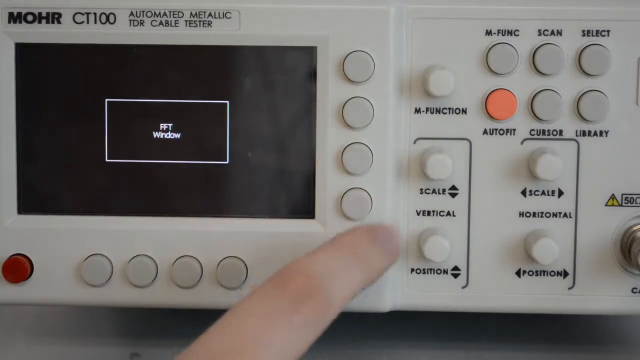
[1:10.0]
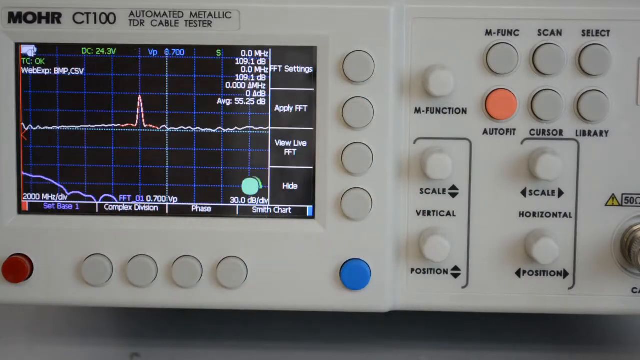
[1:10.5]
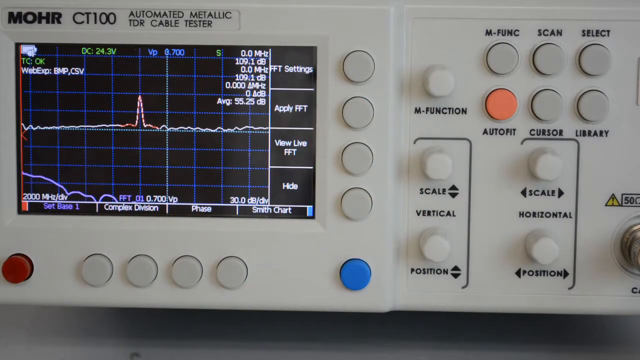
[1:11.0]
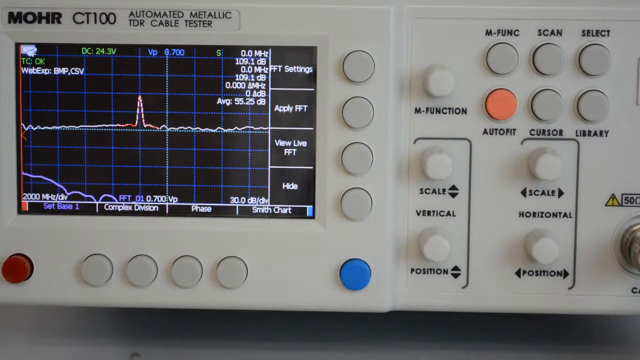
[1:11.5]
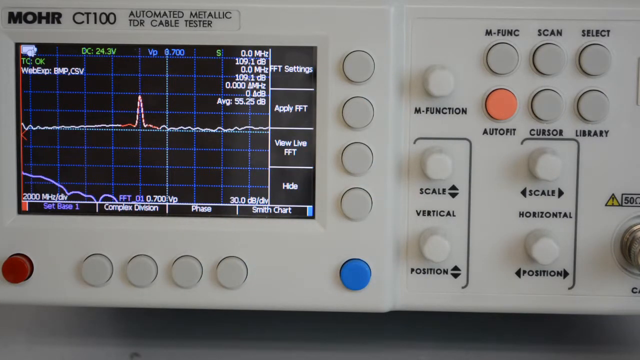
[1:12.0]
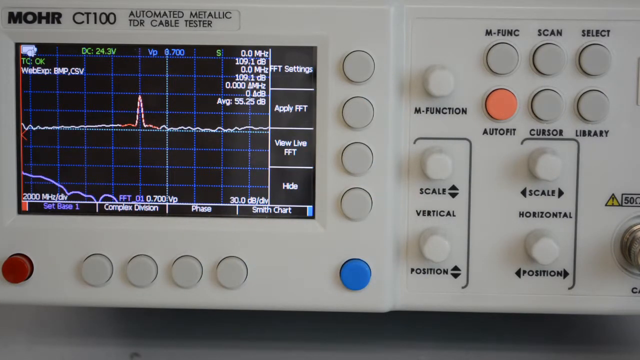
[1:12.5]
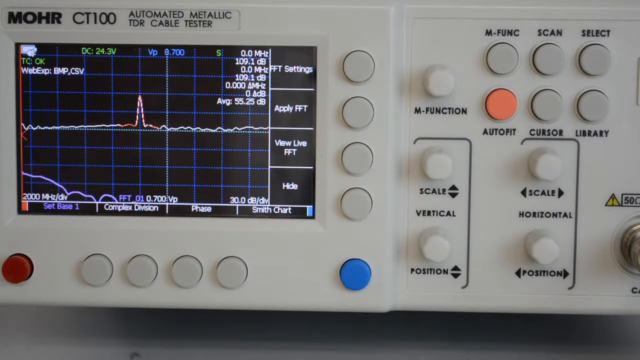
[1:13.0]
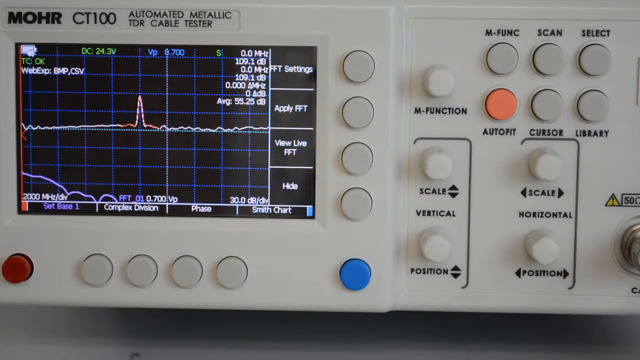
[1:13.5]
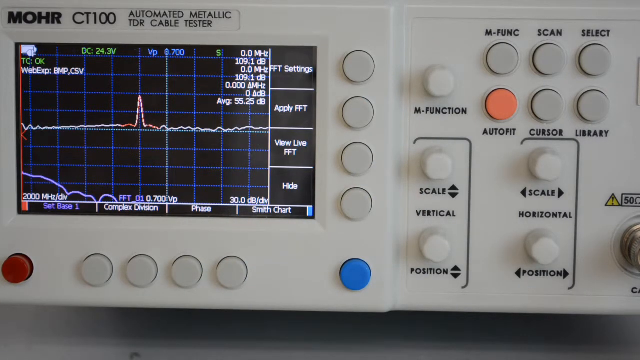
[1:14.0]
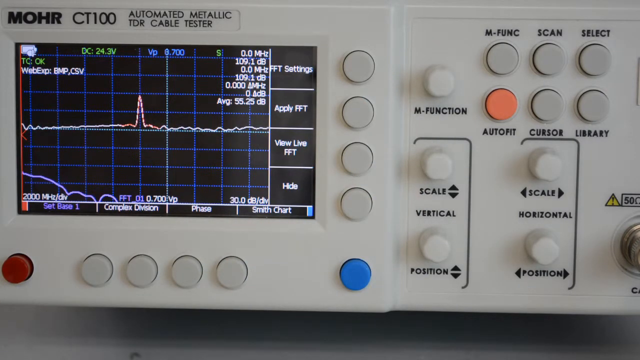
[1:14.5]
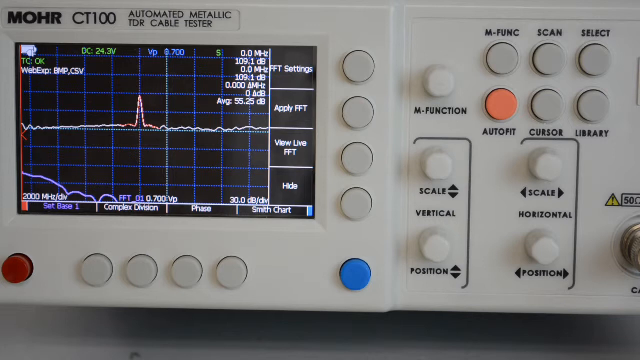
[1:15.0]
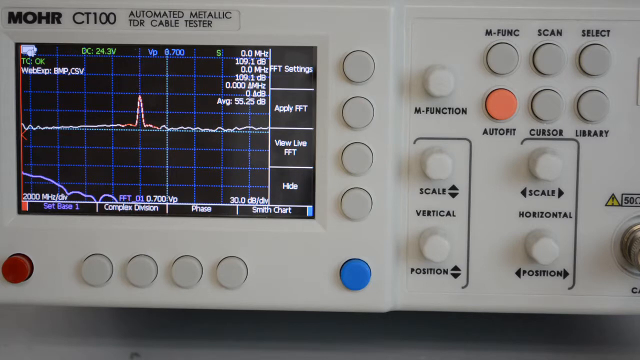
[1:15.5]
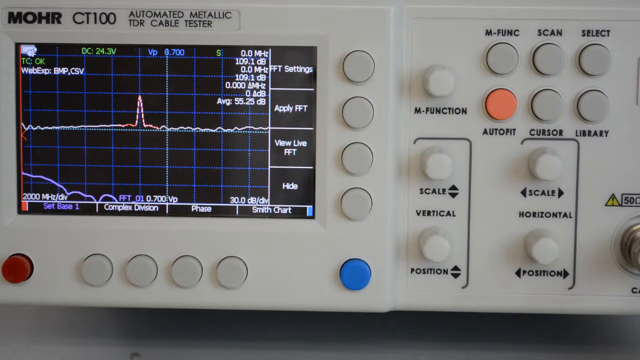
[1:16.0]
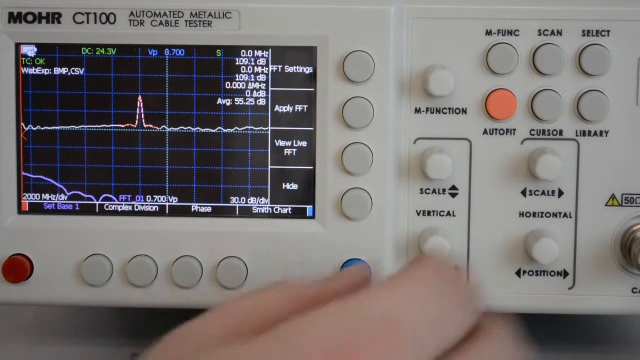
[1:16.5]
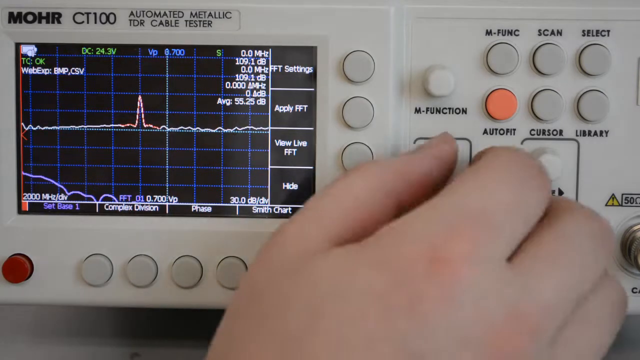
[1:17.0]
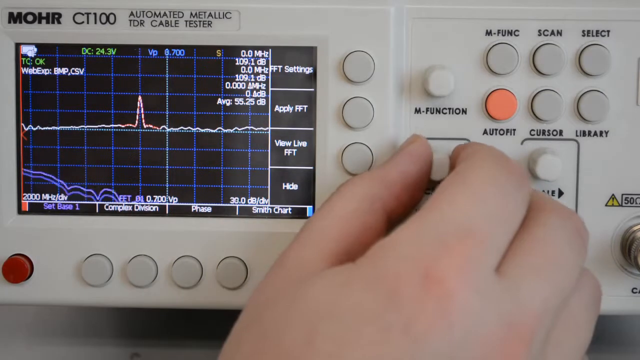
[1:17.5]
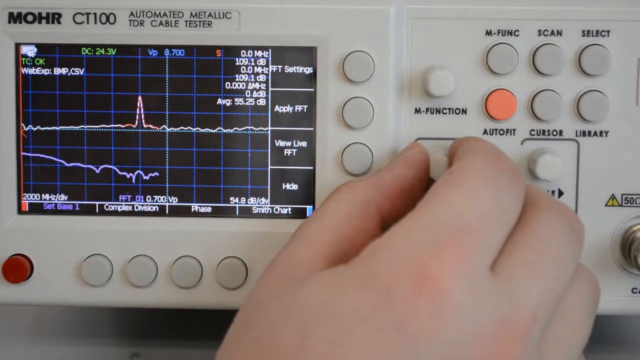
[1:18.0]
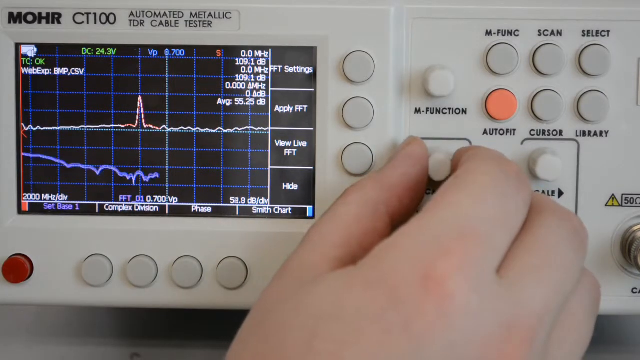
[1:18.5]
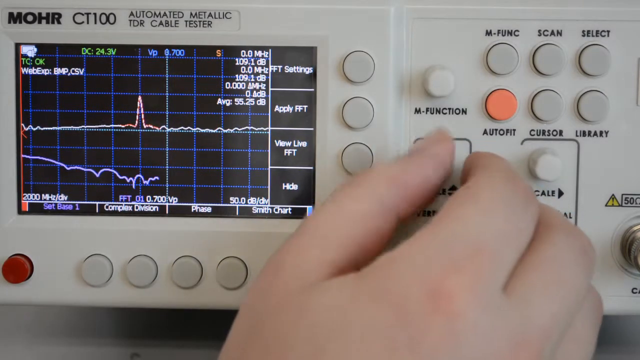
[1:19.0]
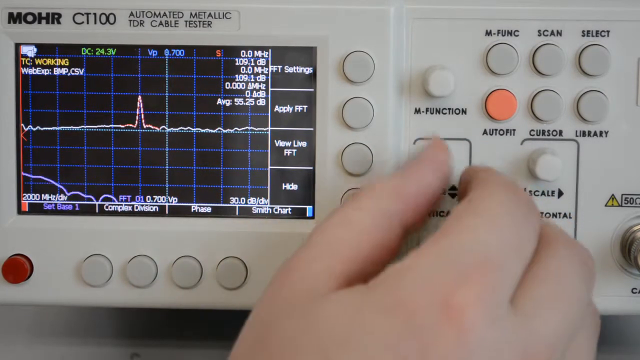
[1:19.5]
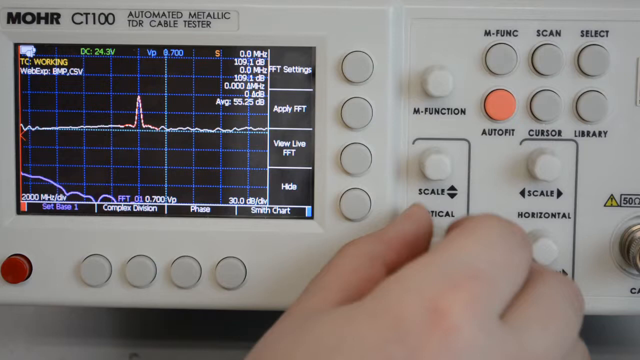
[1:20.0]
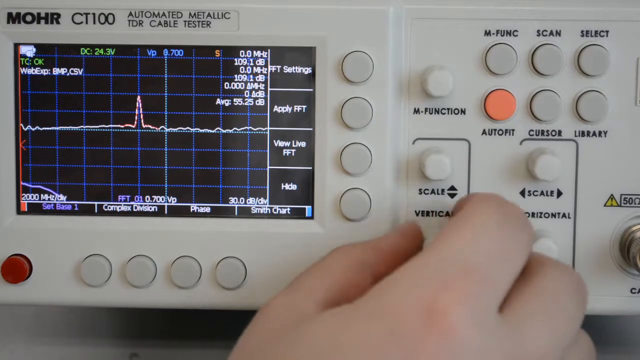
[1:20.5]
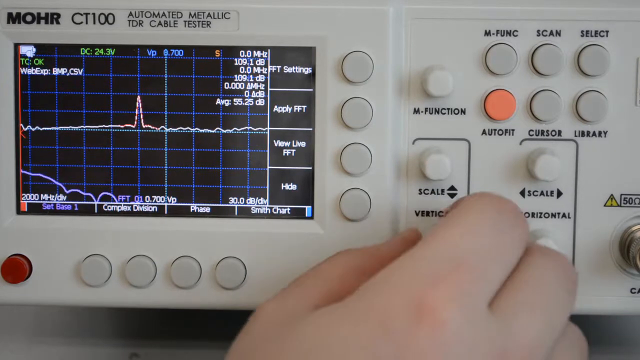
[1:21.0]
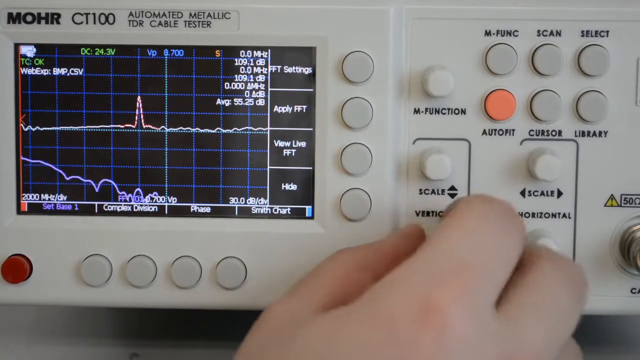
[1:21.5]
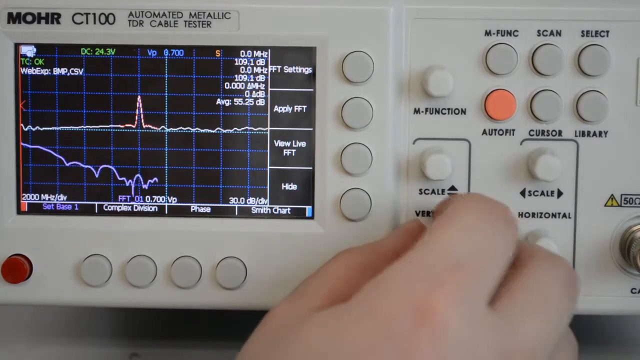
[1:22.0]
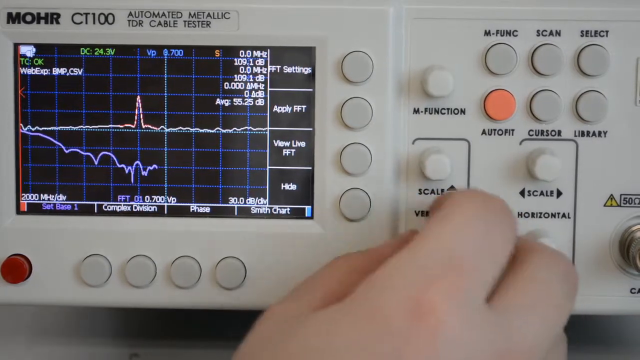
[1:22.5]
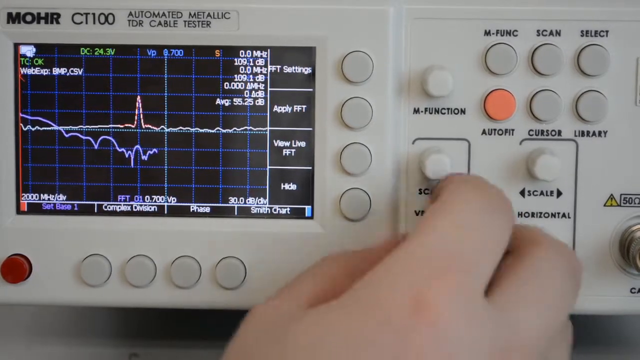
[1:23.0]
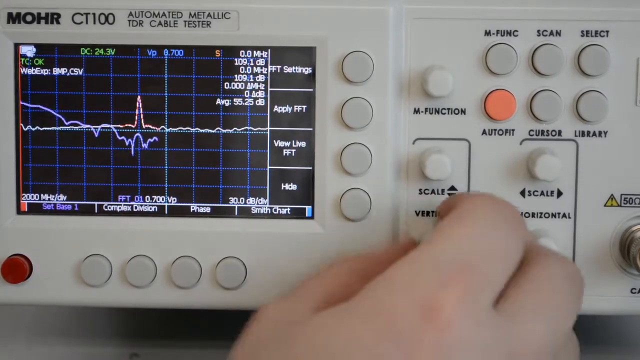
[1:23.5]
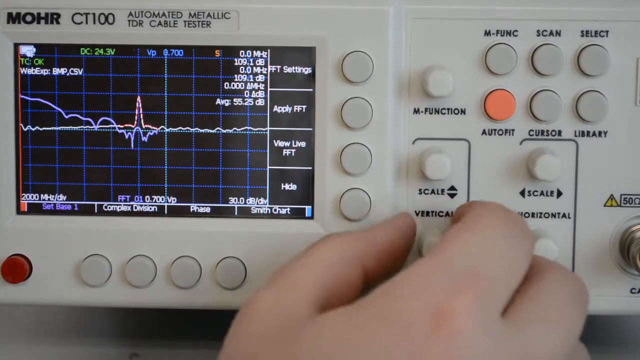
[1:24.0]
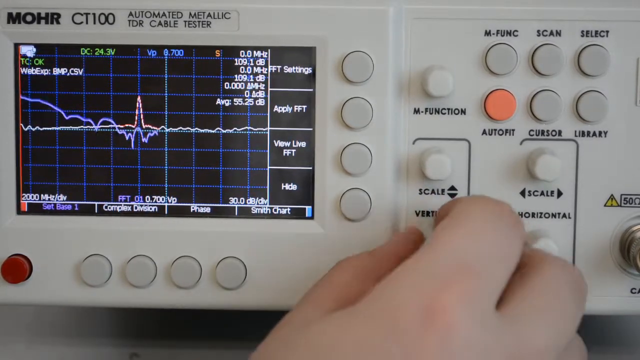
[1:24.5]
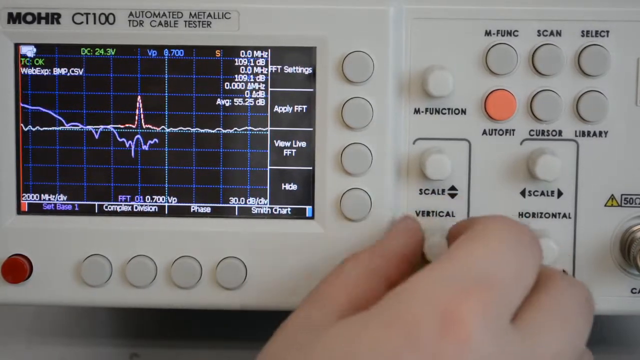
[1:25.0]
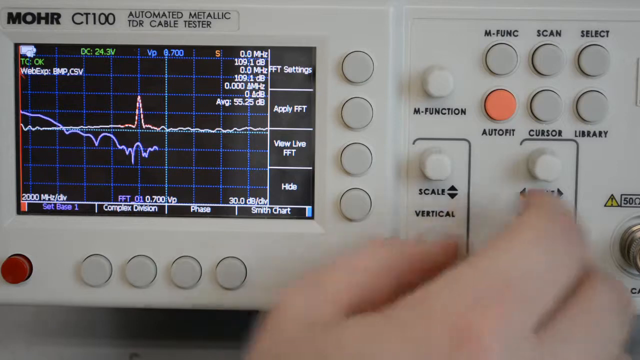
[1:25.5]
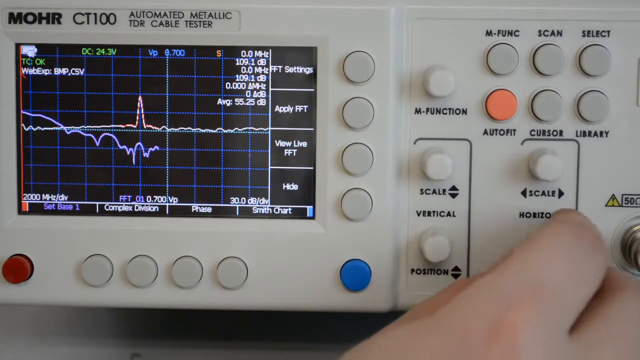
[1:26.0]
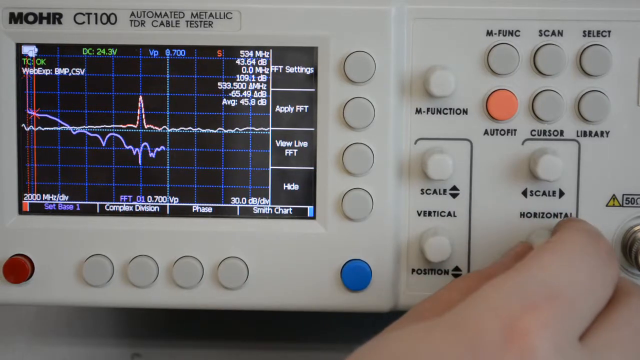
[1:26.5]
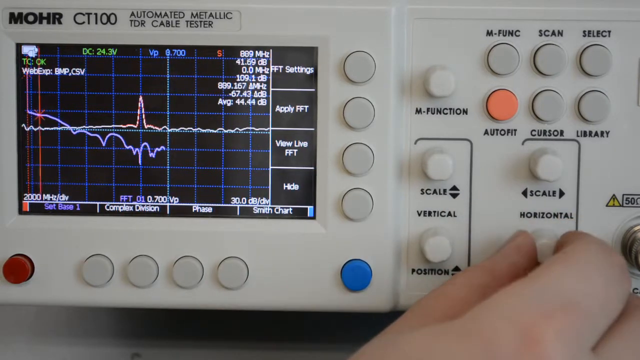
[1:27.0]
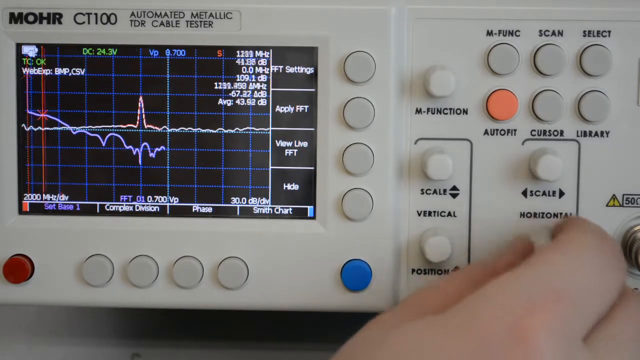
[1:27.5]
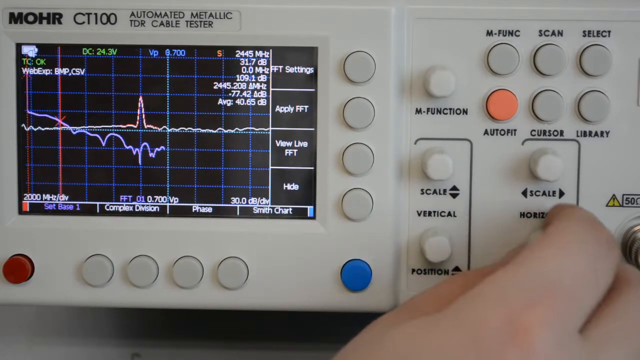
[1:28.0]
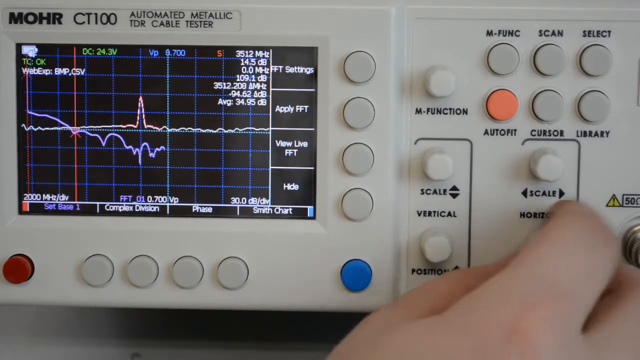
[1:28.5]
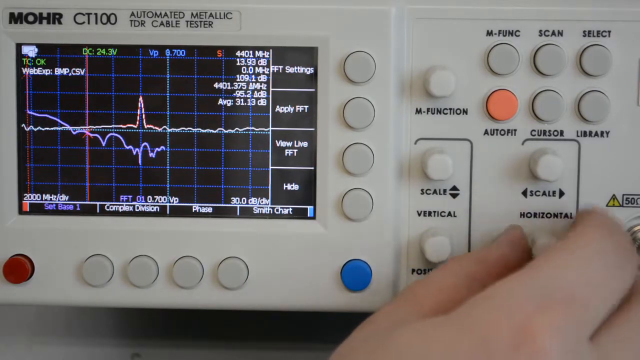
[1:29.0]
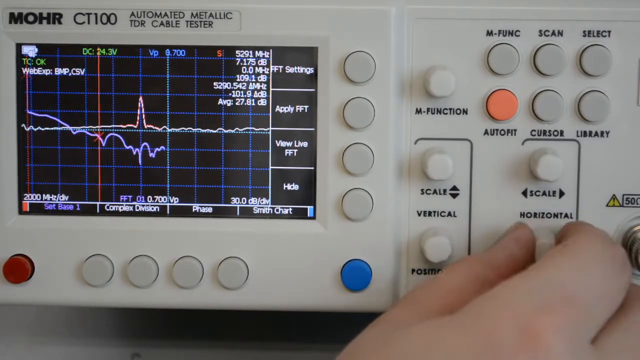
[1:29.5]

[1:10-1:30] The device is still the focal point, close up and zoomed in. The index finger of a person's right hand is underneath the four vertical buttons on the right side of the device's screen. The screen has changed and is now all black, with a white box in the center containing white text that reads "FFT window". The hand moves back away from the device and out of view, and the screen returns to normal, with blue grids on the black background and graph lines; the screen appears to be idle. After several seconds the hand comes back into view. The thumb and index finger grab the scale button and rotate it to the left, counterclockwise, for a few turns, then go down to the position button underneath the scale button and turn it clockwise several turns. The blue graph on the left side of the screen moves up and down. The hand then moves to the horizontal section and its button and does the same.